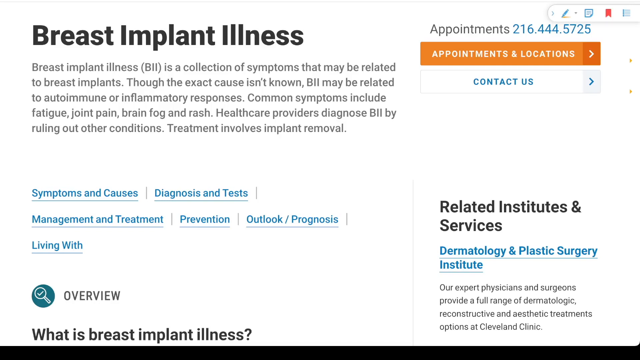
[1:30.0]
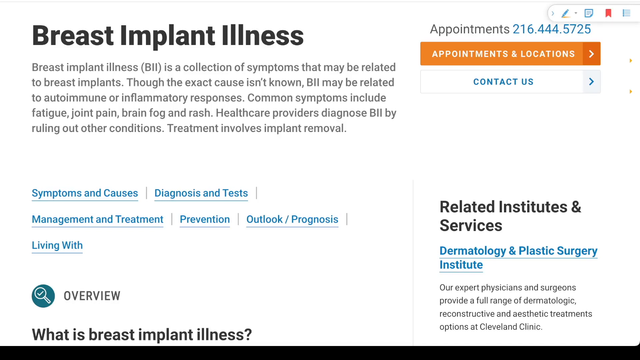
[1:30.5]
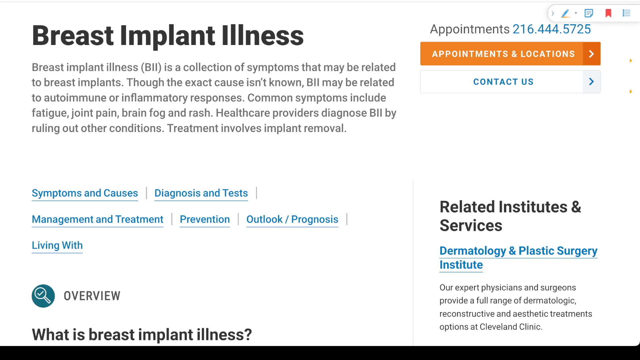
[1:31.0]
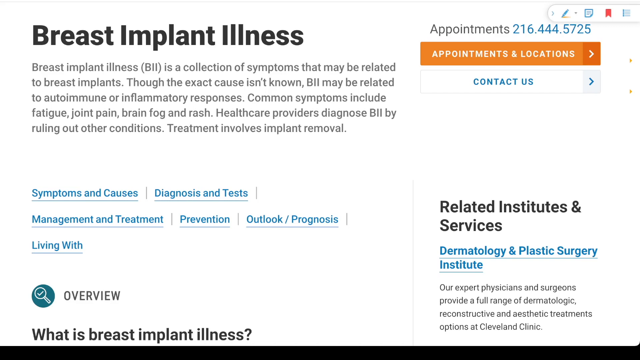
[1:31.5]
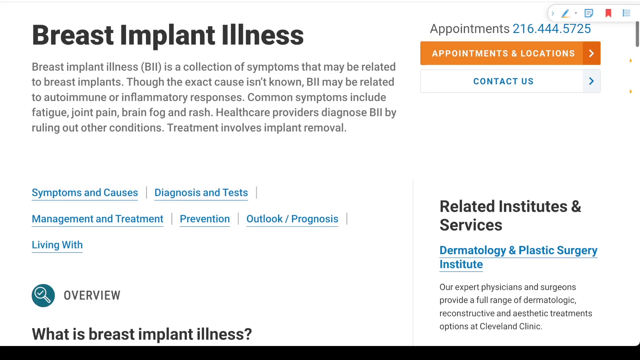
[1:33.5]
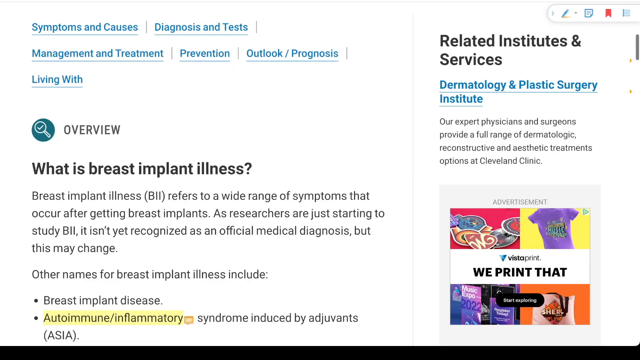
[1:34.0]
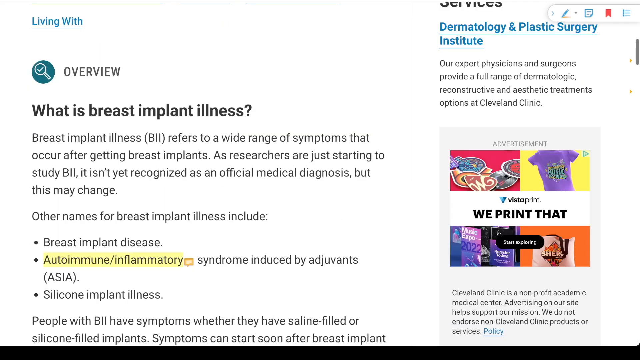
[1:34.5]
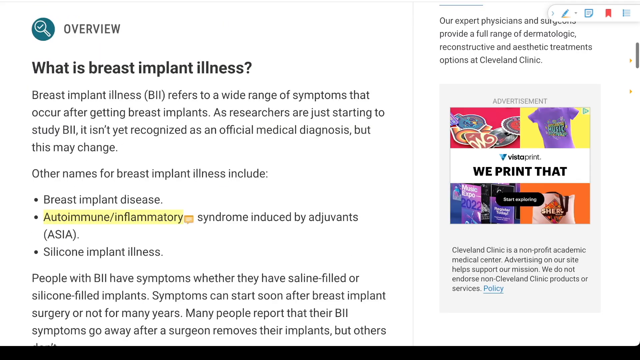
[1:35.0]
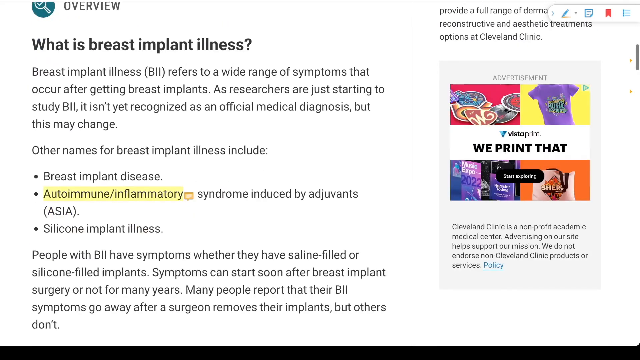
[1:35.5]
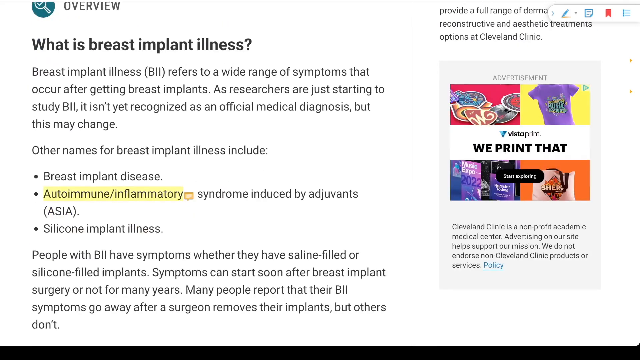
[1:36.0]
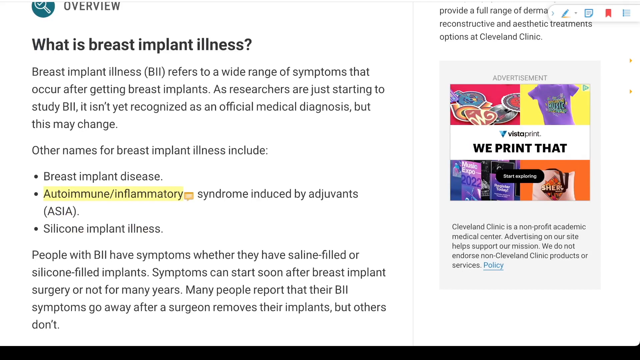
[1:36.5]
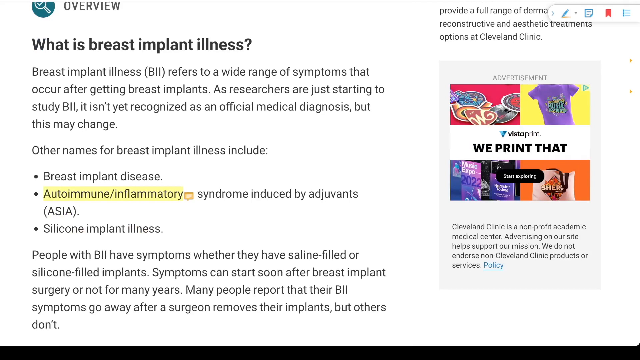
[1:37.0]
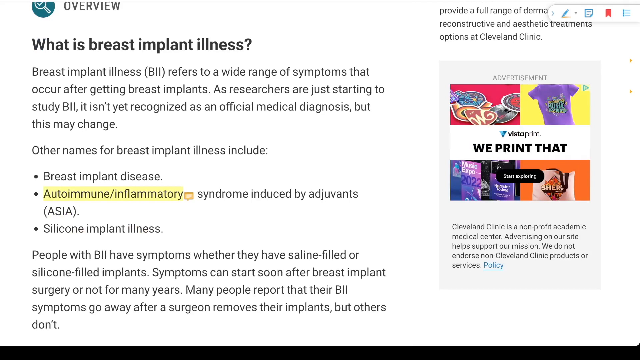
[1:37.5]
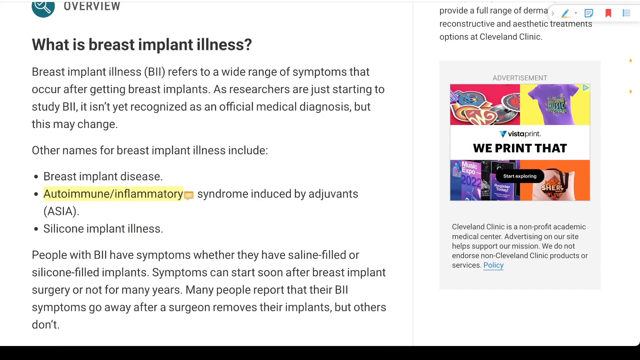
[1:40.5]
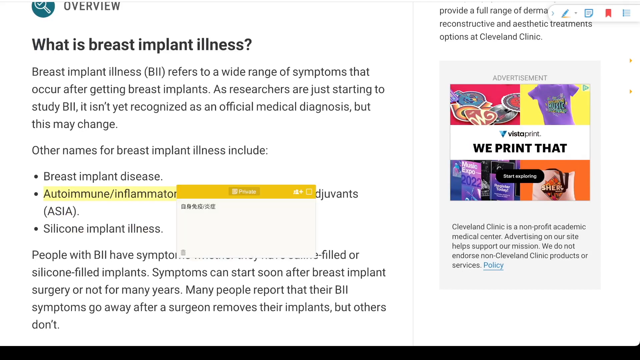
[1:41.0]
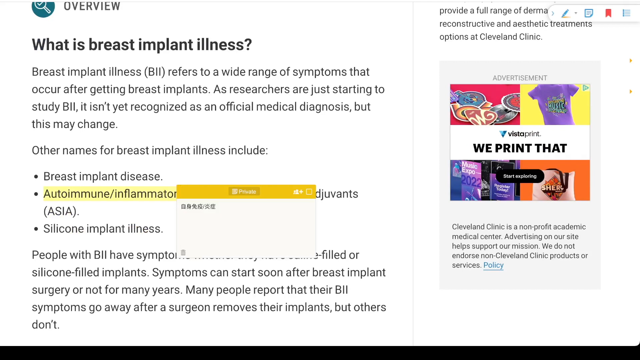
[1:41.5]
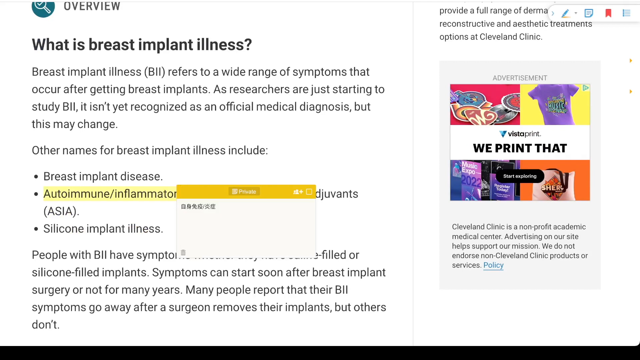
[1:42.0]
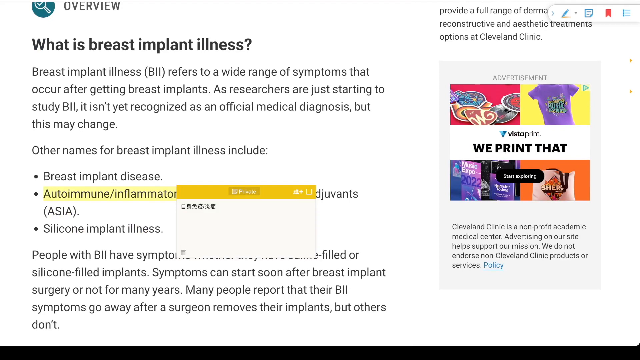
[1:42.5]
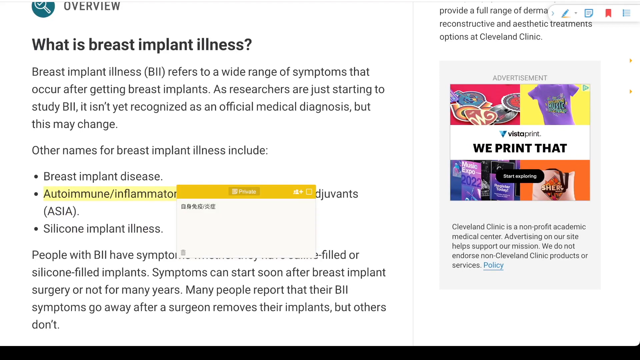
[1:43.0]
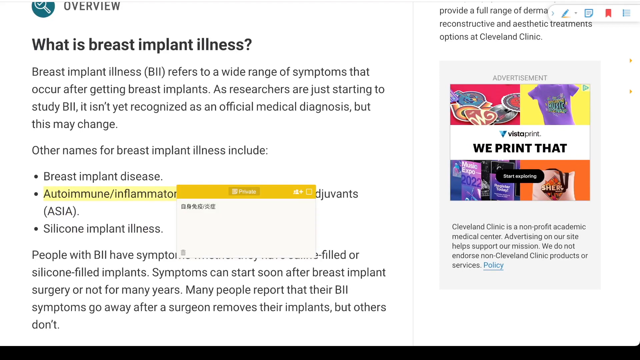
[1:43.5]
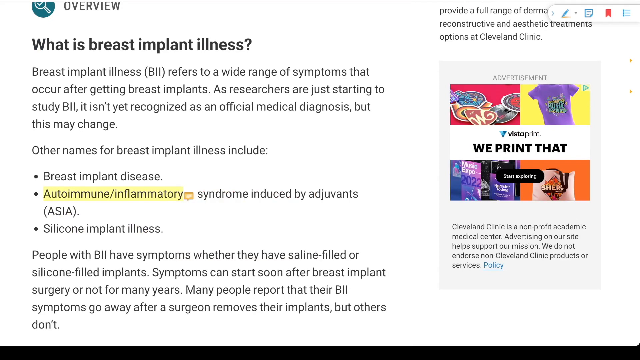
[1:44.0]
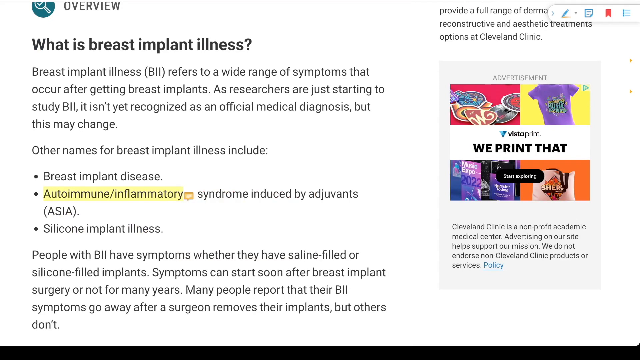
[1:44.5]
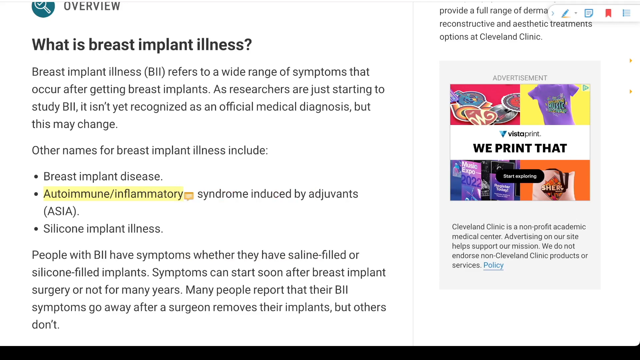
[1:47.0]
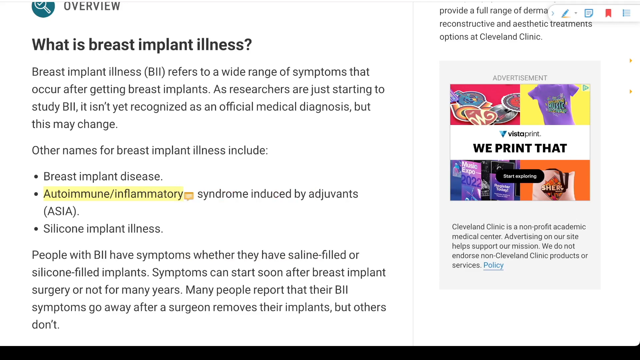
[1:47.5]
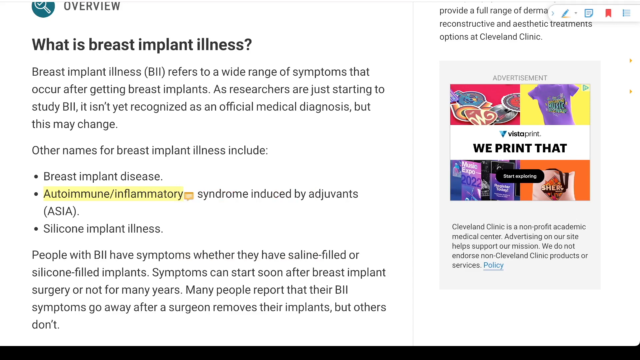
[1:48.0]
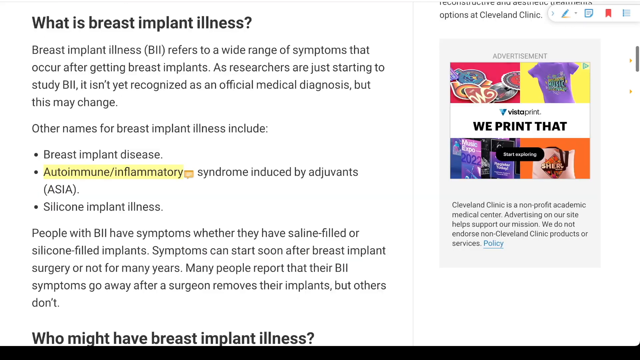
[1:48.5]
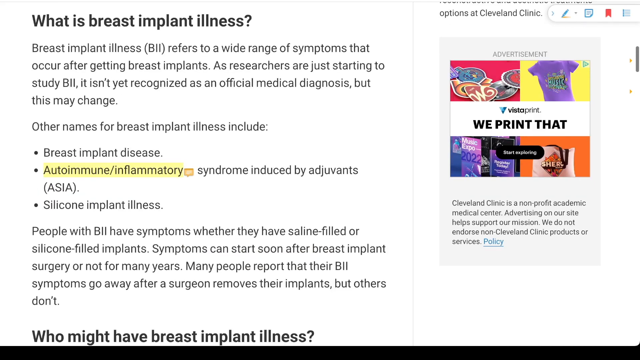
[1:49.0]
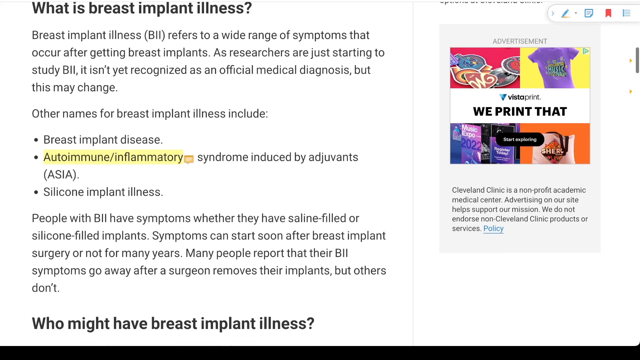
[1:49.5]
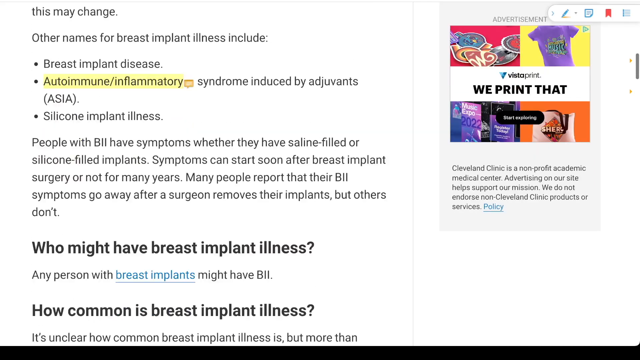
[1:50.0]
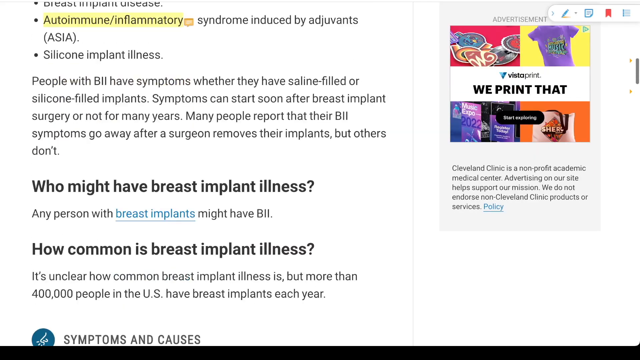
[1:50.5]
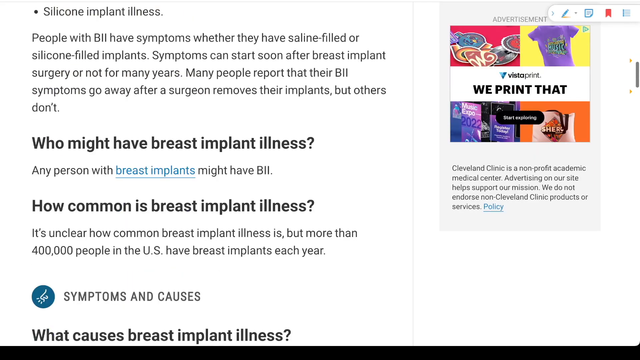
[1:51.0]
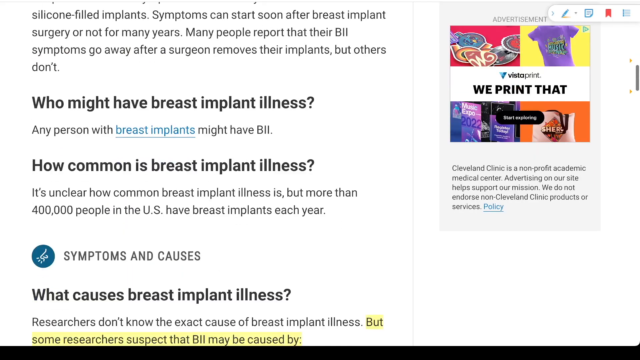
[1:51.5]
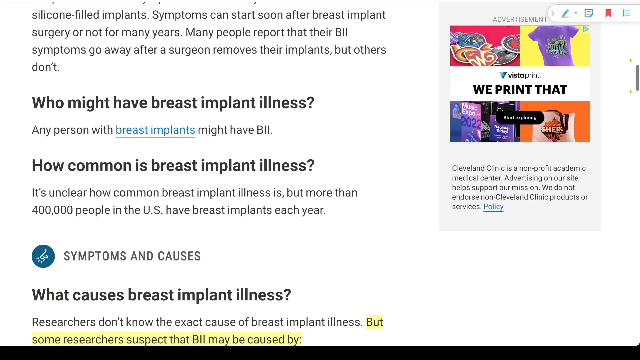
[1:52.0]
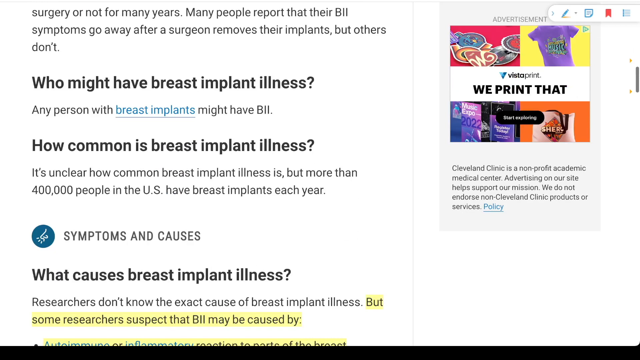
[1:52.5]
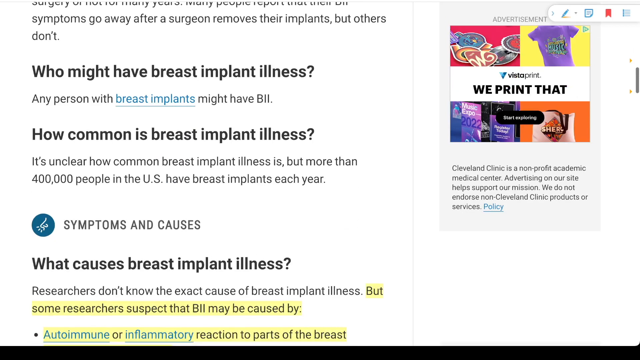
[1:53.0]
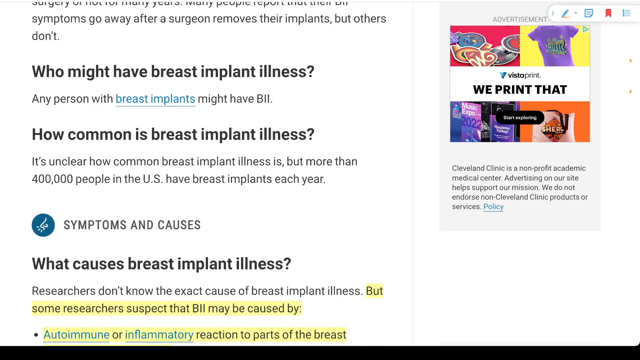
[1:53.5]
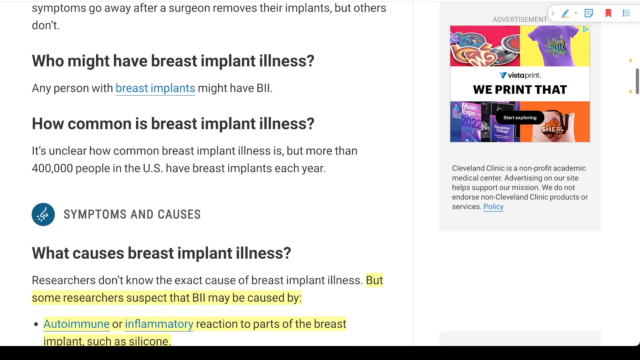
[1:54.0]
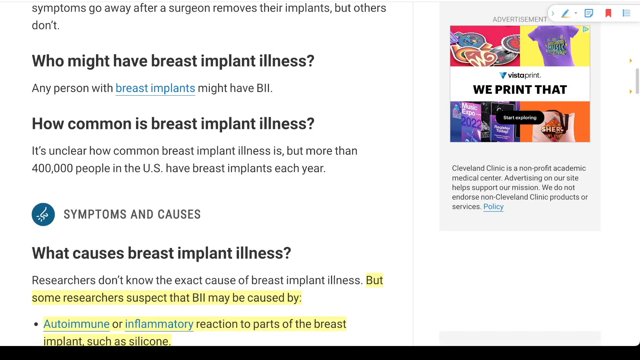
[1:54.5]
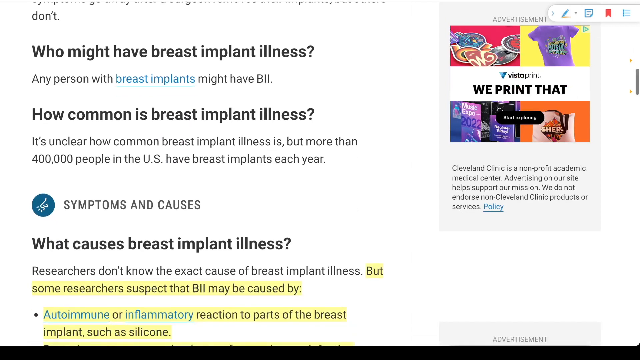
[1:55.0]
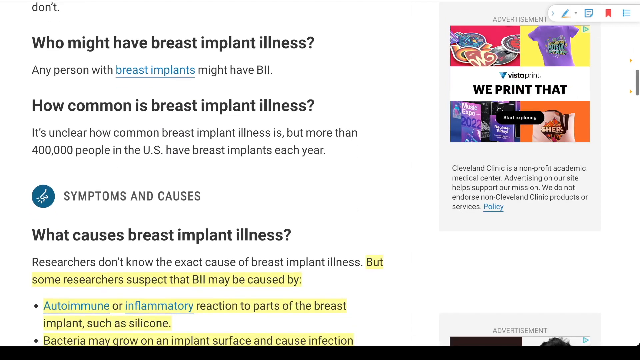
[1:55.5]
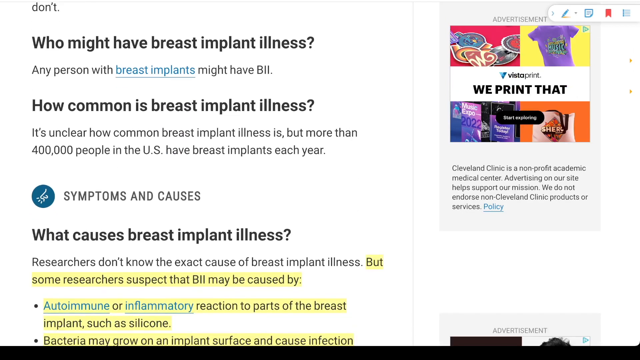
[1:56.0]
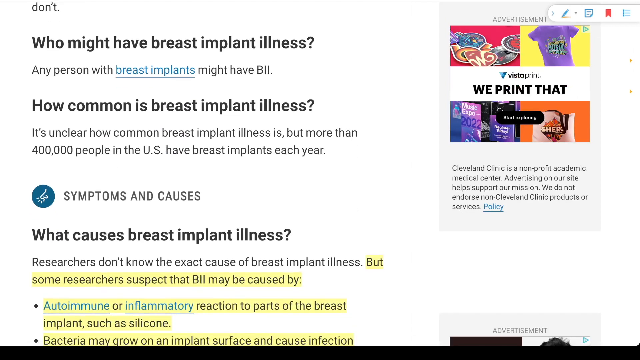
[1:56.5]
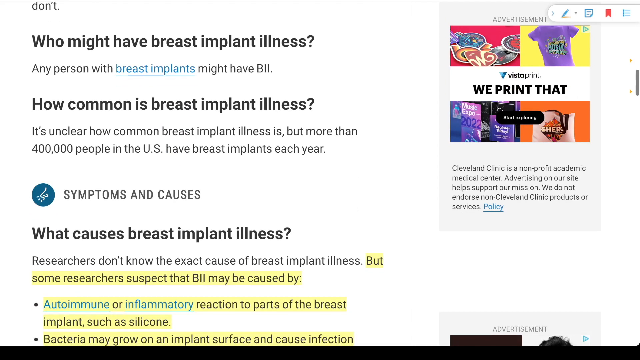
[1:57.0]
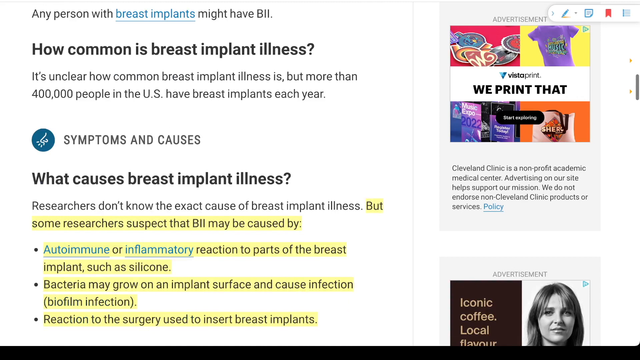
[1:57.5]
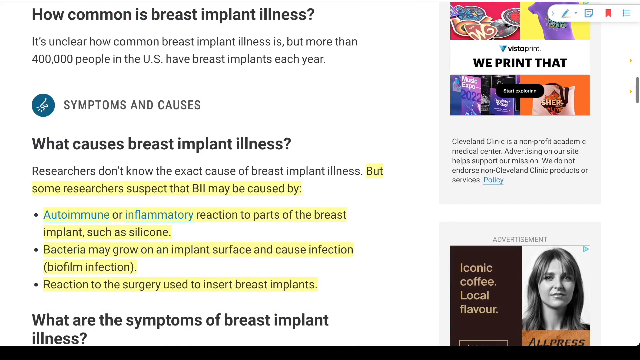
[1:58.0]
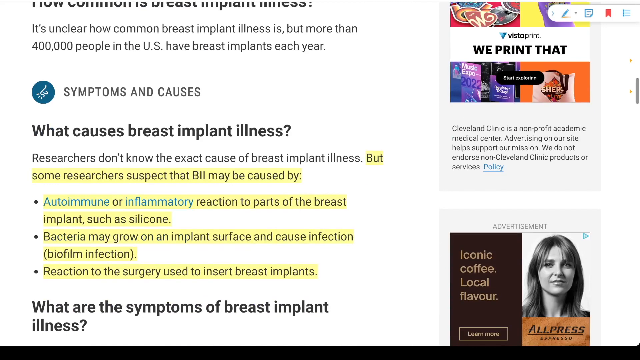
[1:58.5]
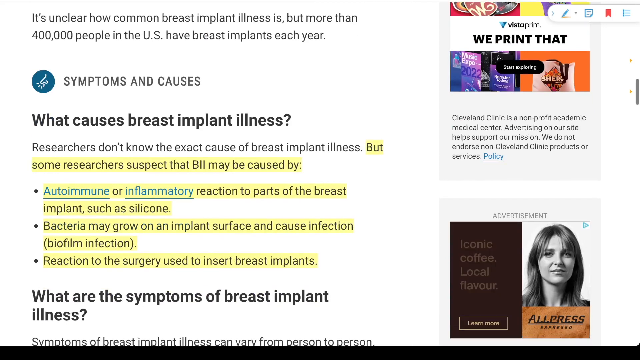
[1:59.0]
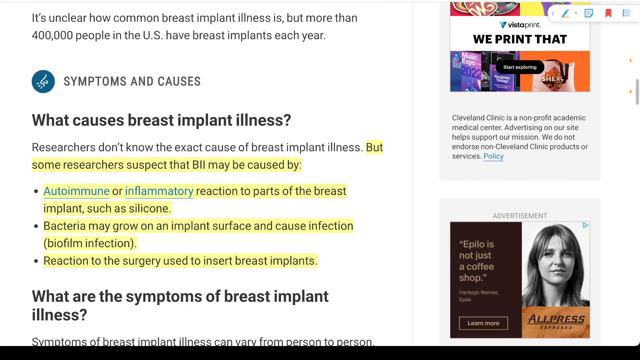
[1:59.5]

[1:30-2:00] The medical page about breast implant illness scrolls down to a new section titled "what is breast implant illness." Another very small text box appears, similar to the earlier one but not the same size, looking like a comment or message box, and it disappears immediately. The page scrolls down a little further, showing new sections on who might have breast implant illness and how to track it. Further down, "autoimmune inflammatory" is highlighted in yellow.